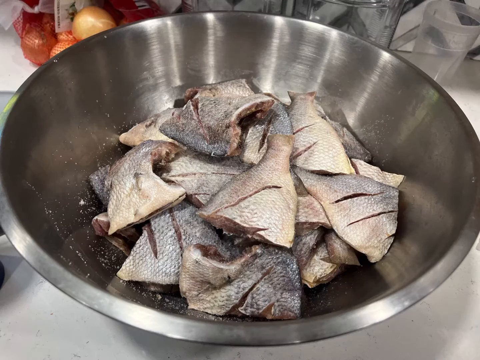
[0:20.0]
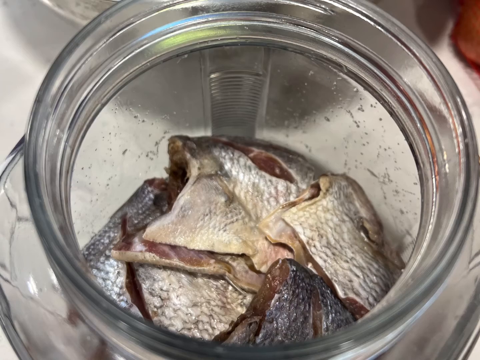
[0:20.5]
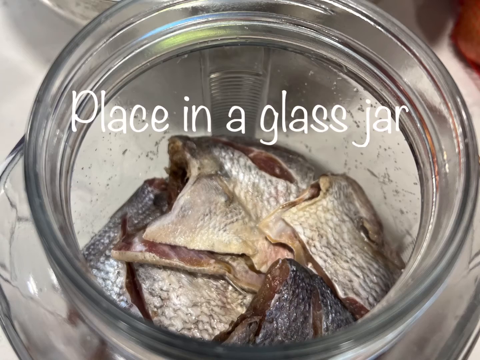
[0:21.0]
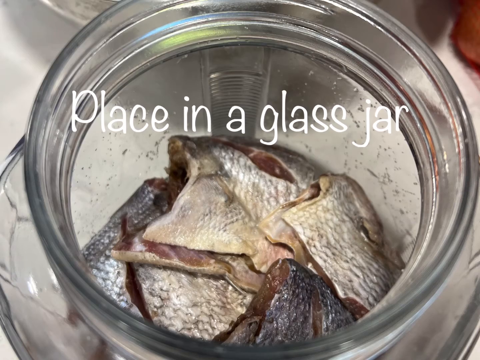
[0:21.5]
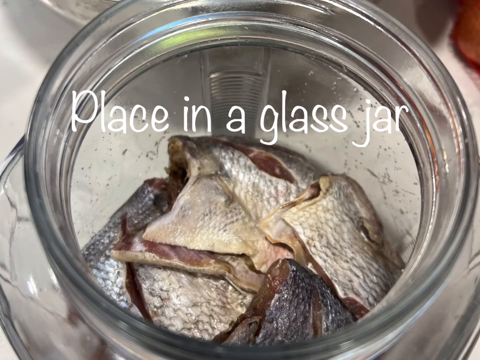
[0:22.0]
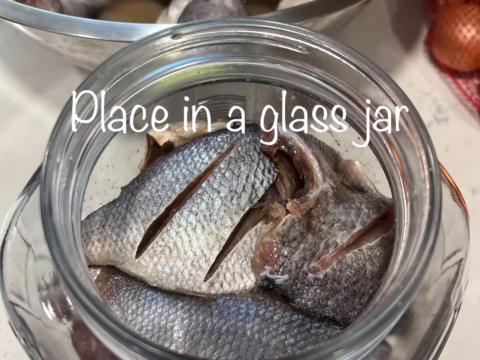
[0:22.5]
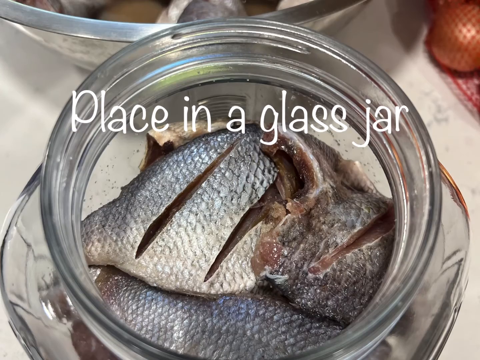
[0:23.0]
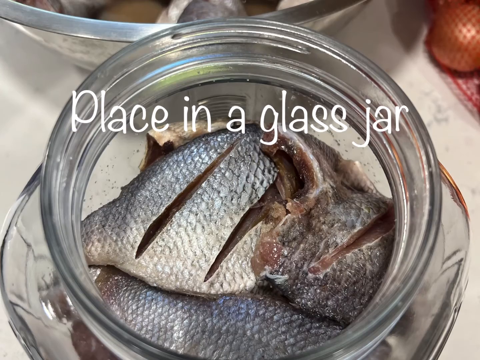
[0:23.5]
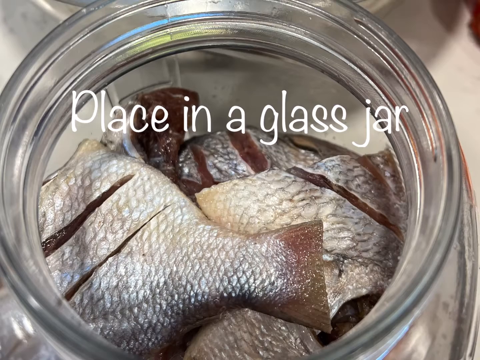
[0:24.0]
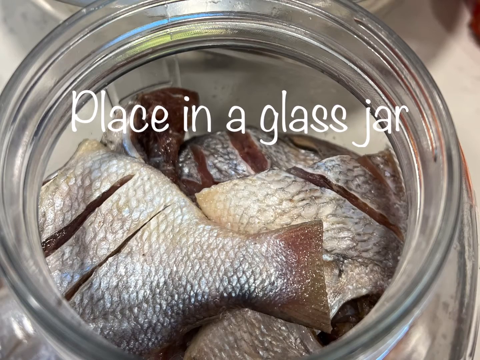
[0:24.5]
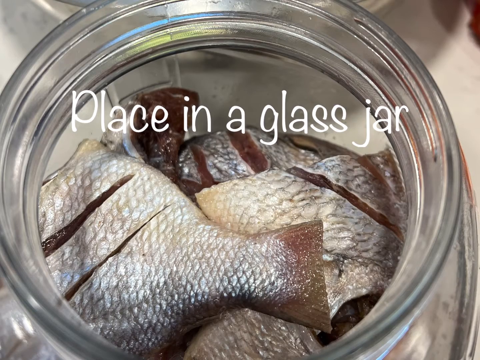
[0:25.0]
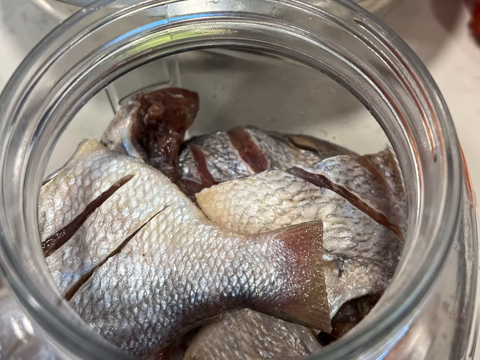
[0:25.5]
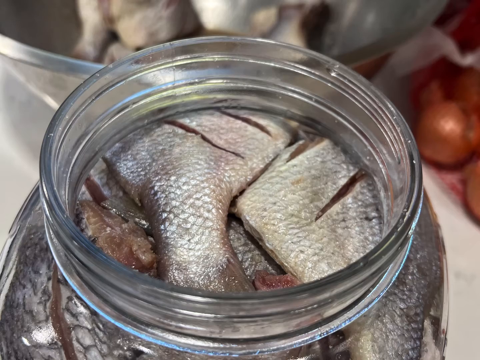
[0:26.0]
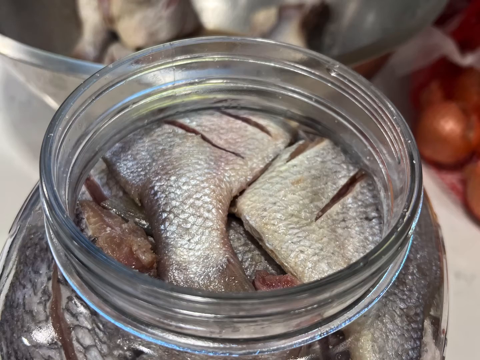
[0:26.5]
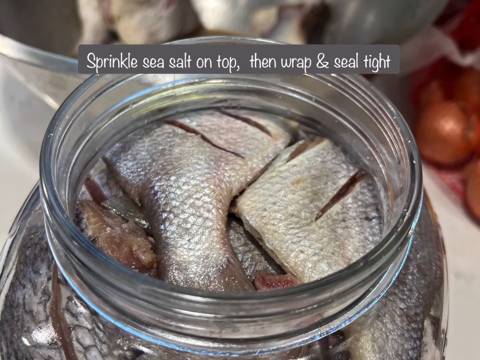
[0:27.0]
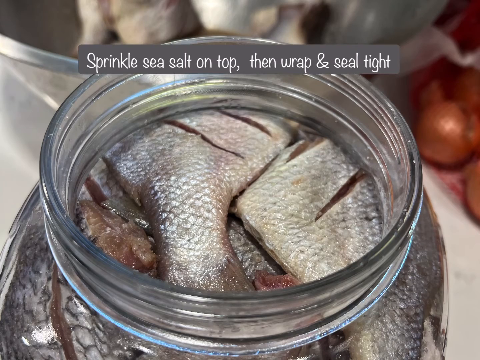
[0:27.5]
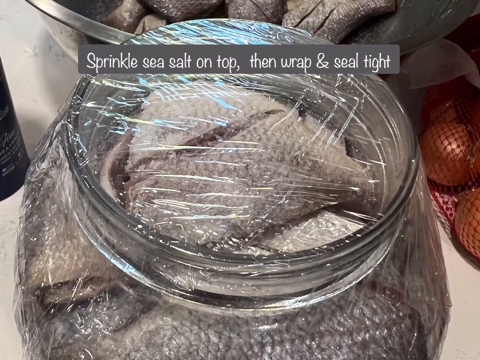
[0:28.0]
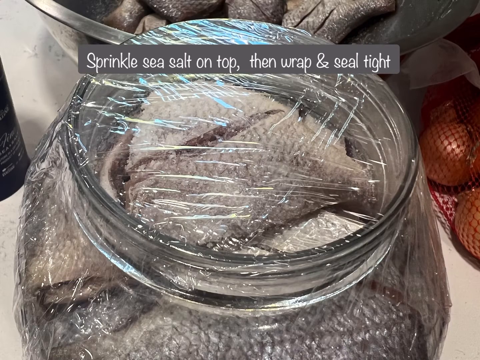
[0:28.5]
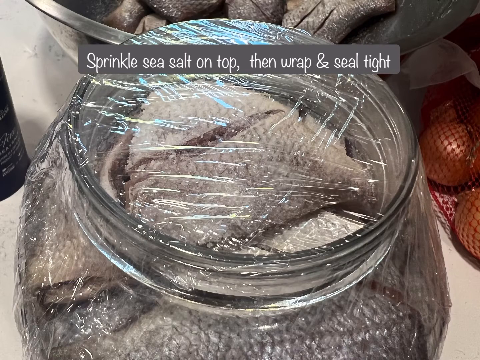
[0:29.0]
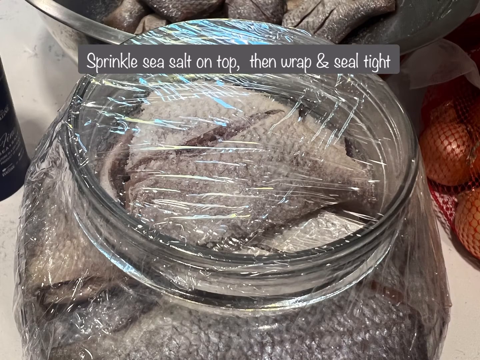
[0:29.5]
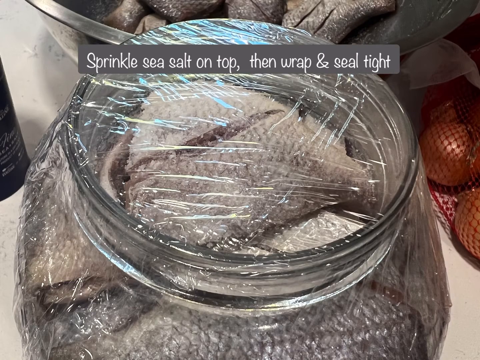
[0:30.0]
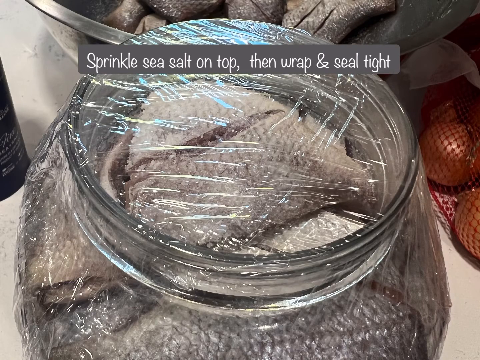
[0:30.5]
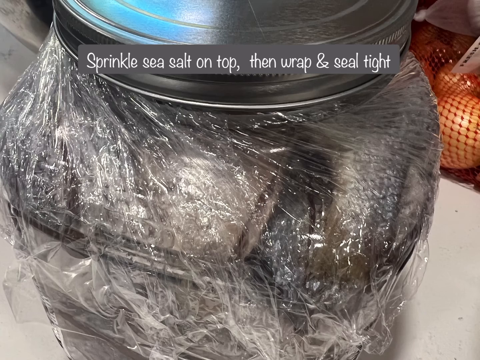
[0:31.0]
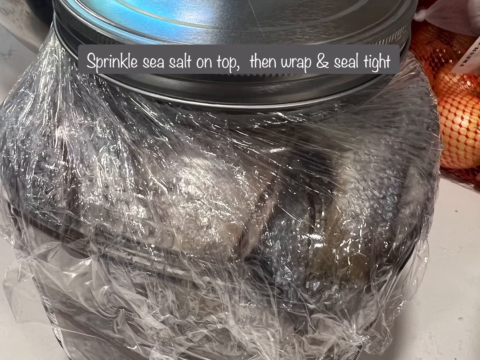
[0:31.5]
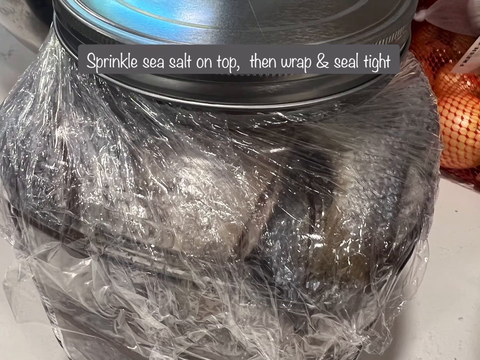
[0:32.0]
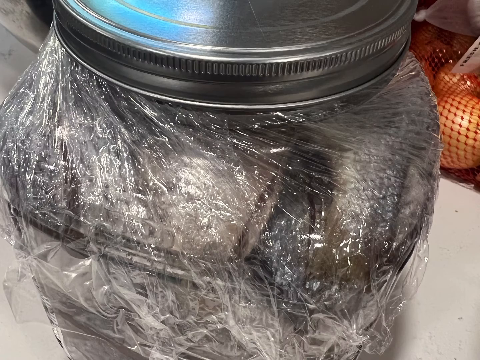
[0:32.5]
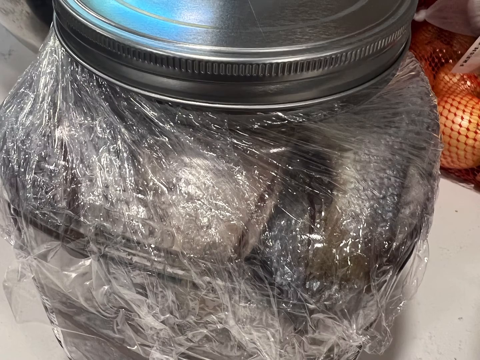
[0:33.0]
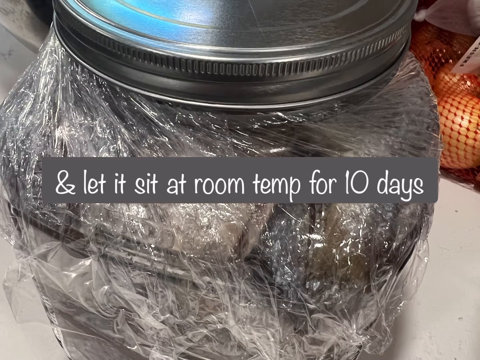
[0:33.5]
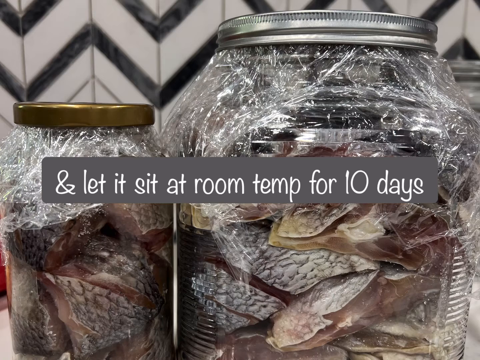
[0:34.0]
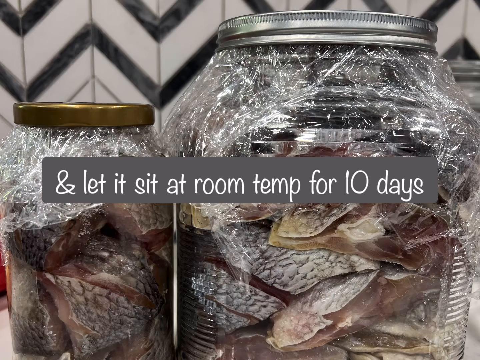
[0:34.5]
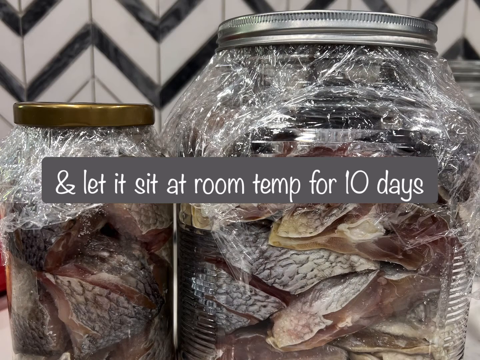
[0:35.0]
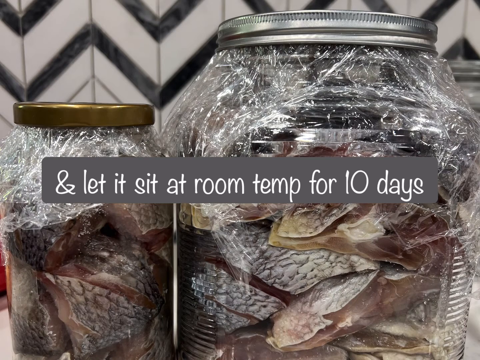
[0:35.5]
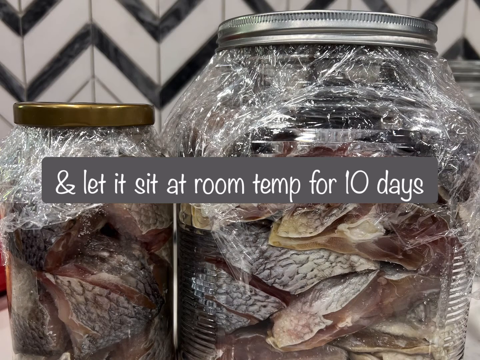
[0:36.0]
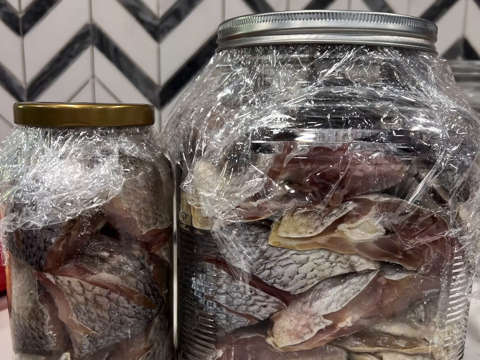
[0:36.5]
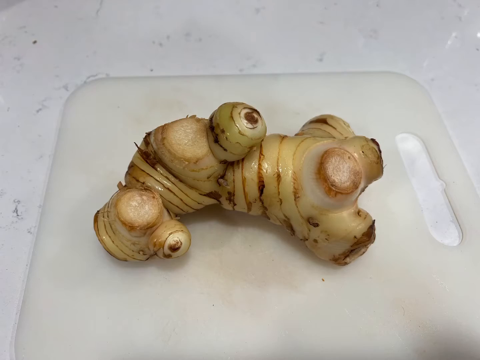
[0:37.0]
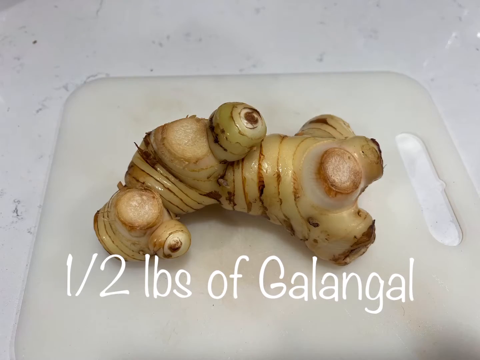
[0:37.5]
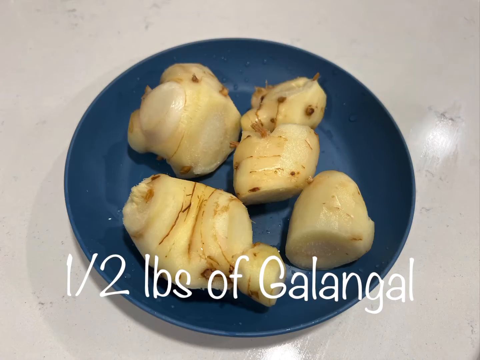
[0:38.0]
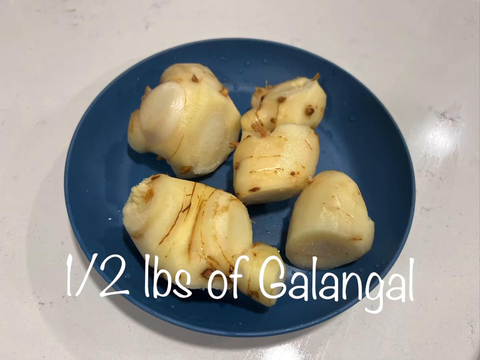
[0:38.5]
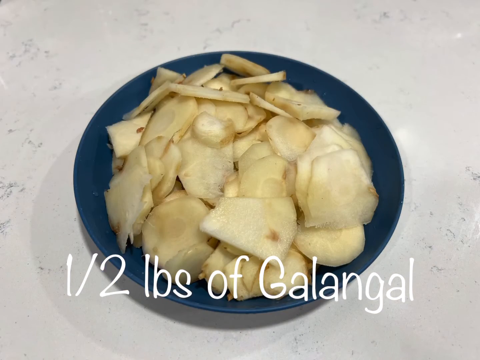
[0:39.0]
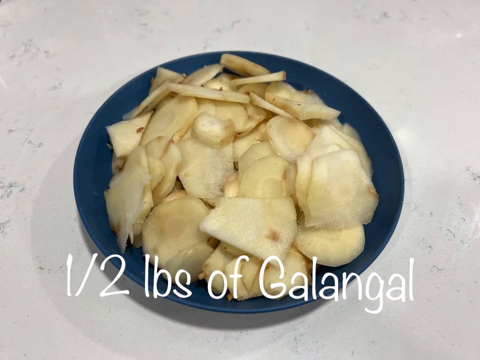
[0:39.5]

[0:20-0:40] The pieces of fish are chopped up in a bowl and covered very generously with a lot of salt. The fish pieces are then all added to a jar and covered with cling film and a lid, and the text overlay indicates that they should be stored like this for a long period of time. The footage moves from one picture to the next rather than showing the jarring and storing as continuous video, but the text overlay makes clear what is happening. The same kind of silver bowl is used. The fish has lots of scoring marks, although the scoring itself is never shown or mentioned in the text overlay; the pieces are simply scored by the time they end up in the jar.